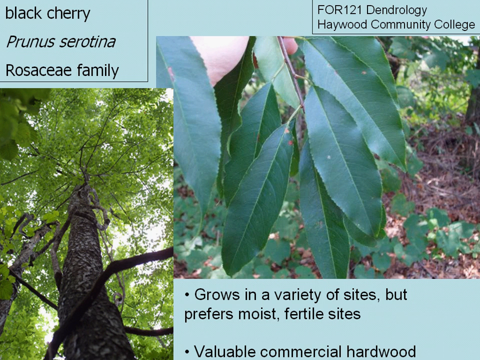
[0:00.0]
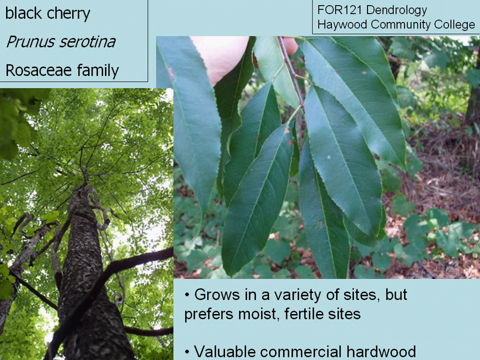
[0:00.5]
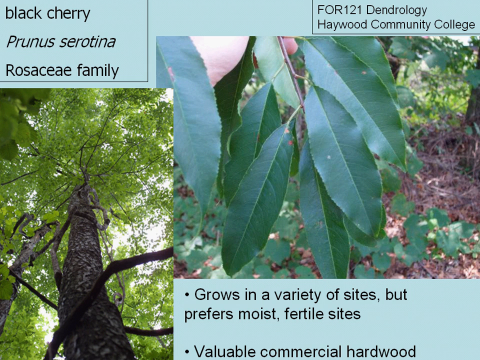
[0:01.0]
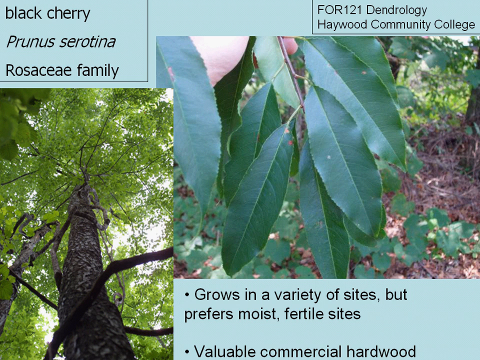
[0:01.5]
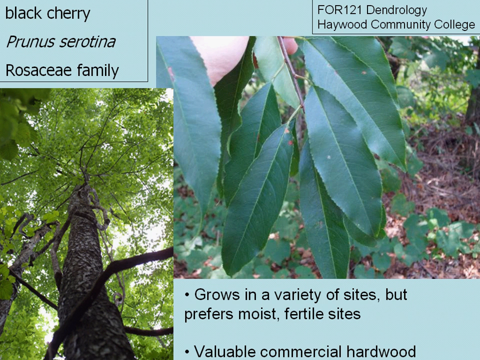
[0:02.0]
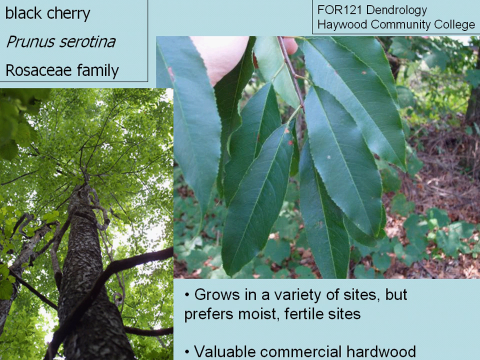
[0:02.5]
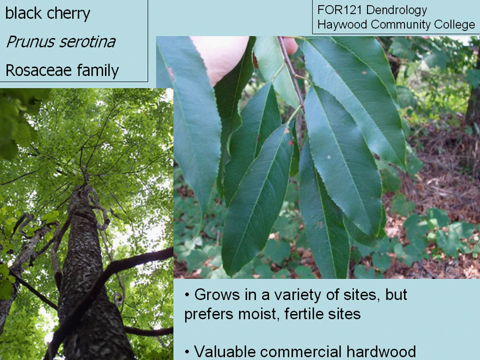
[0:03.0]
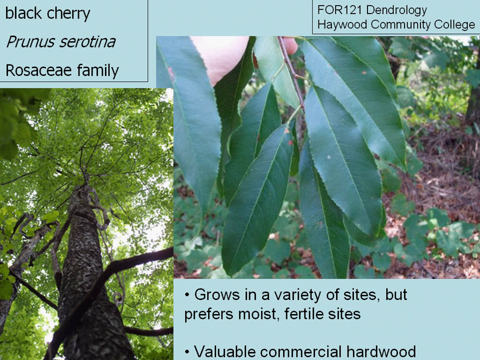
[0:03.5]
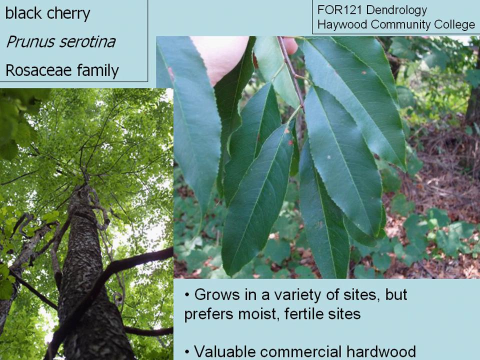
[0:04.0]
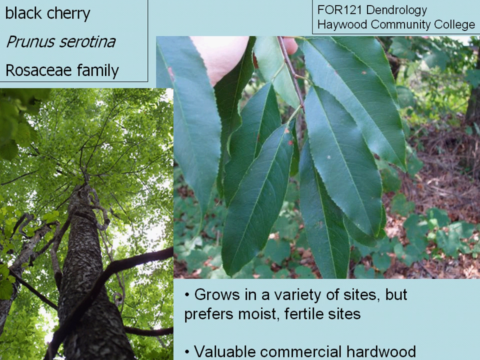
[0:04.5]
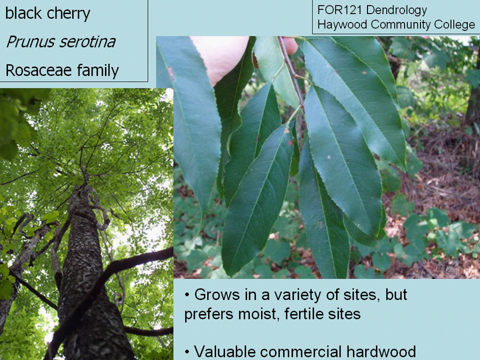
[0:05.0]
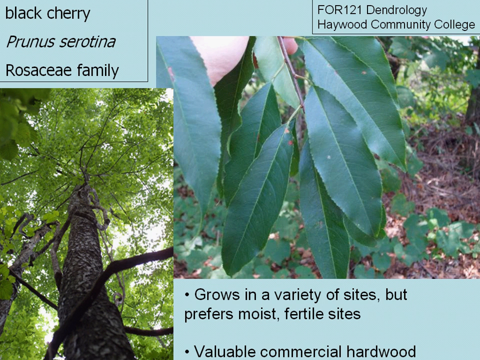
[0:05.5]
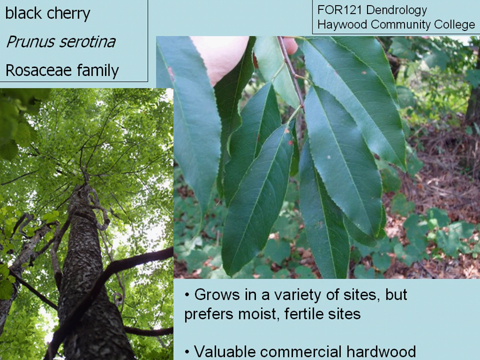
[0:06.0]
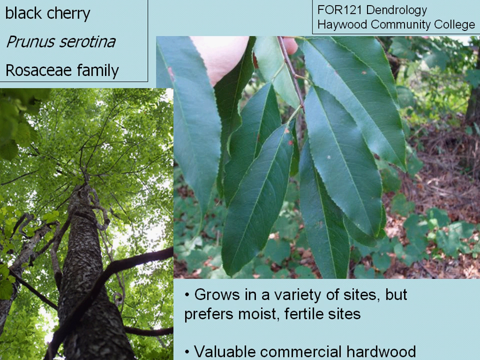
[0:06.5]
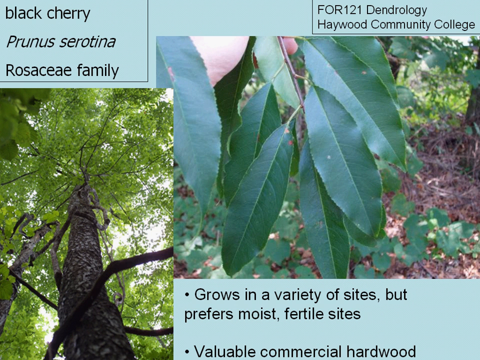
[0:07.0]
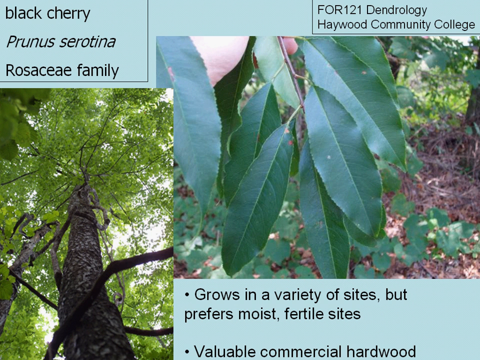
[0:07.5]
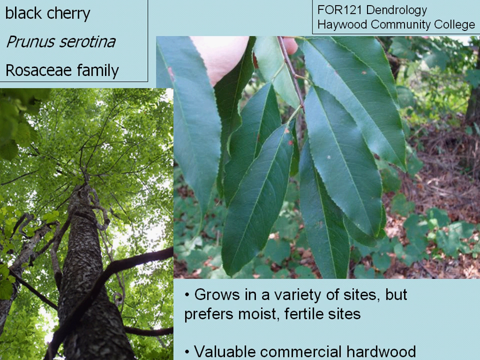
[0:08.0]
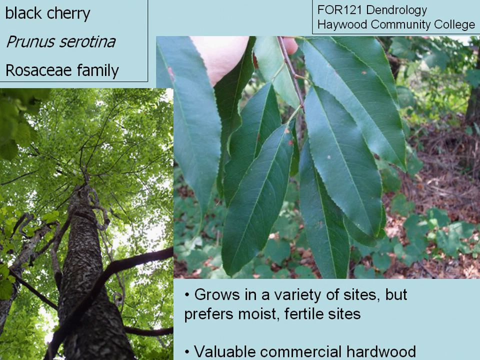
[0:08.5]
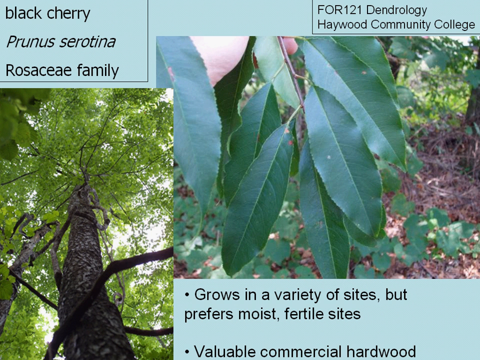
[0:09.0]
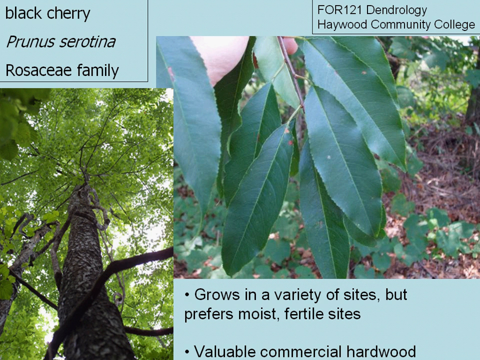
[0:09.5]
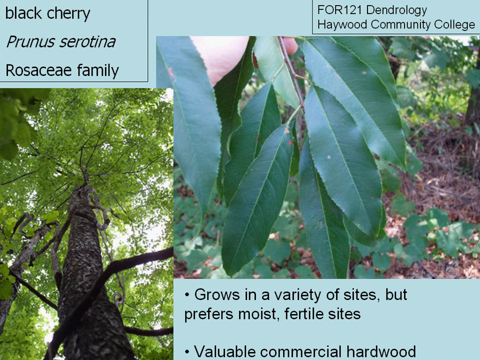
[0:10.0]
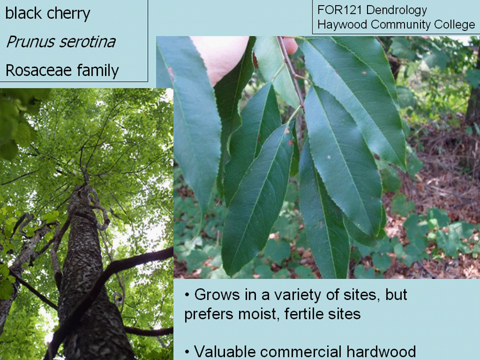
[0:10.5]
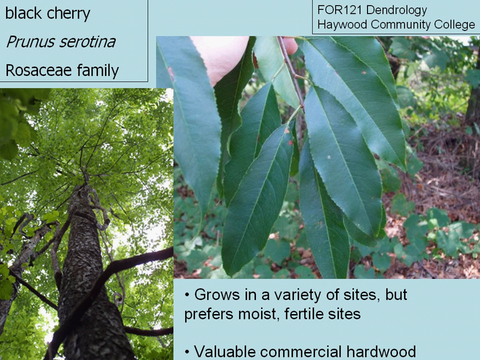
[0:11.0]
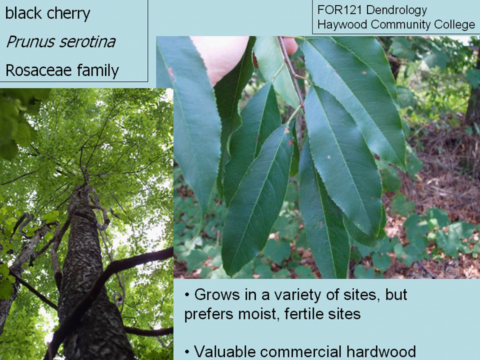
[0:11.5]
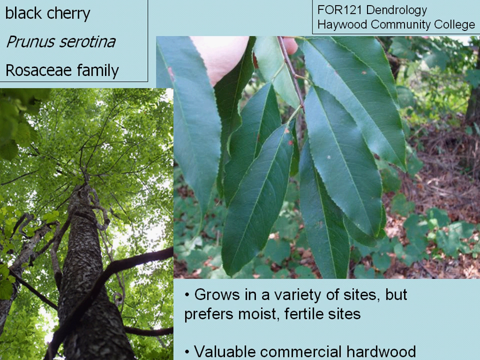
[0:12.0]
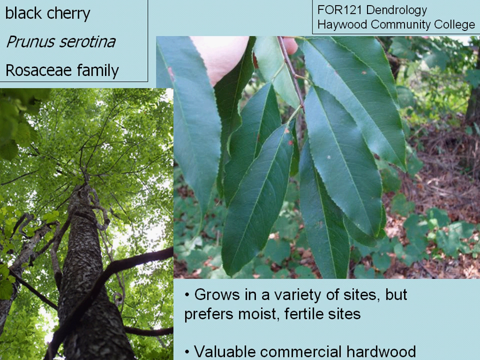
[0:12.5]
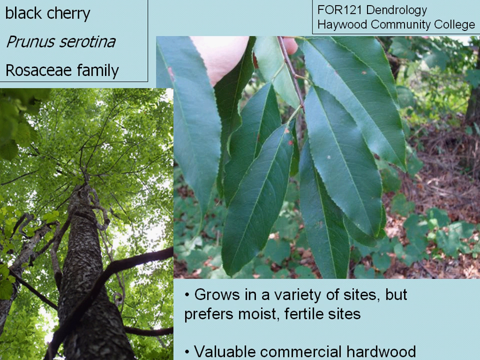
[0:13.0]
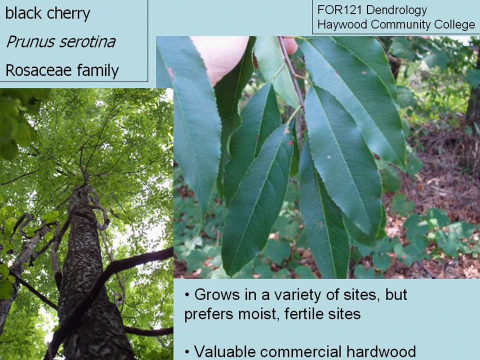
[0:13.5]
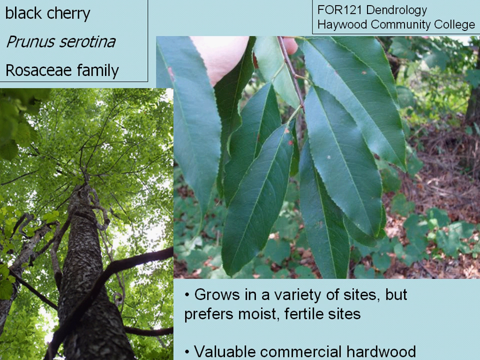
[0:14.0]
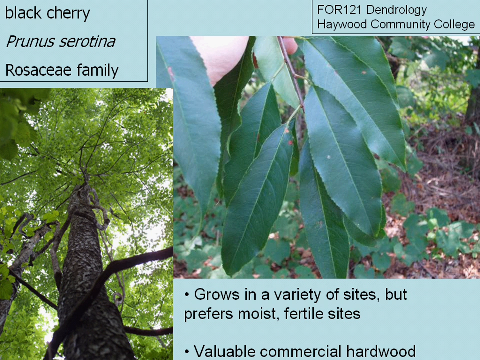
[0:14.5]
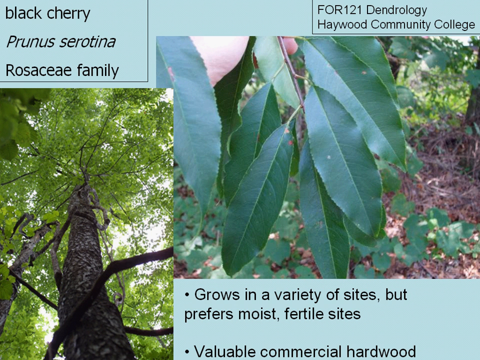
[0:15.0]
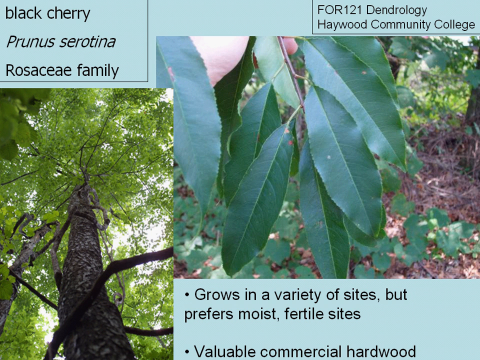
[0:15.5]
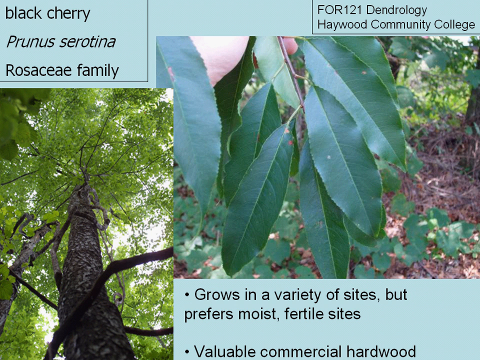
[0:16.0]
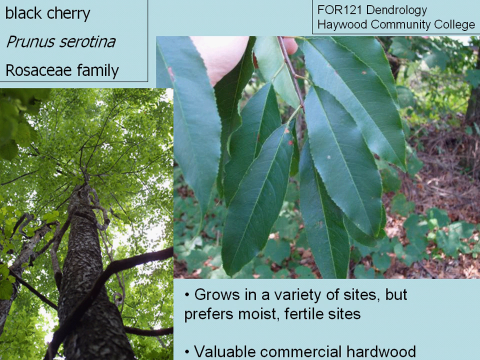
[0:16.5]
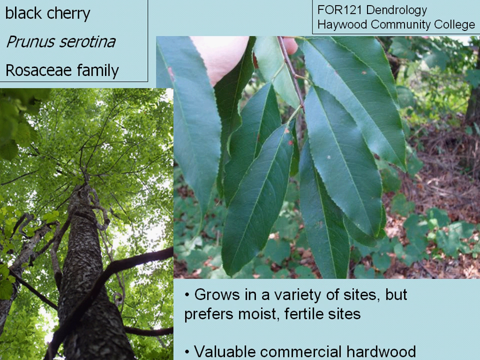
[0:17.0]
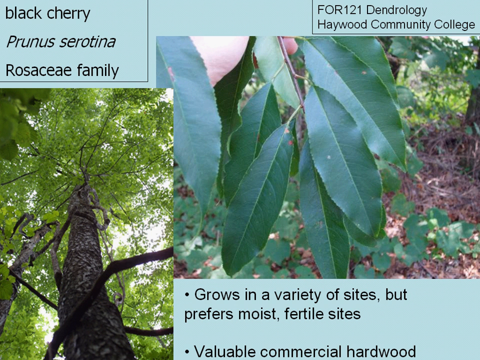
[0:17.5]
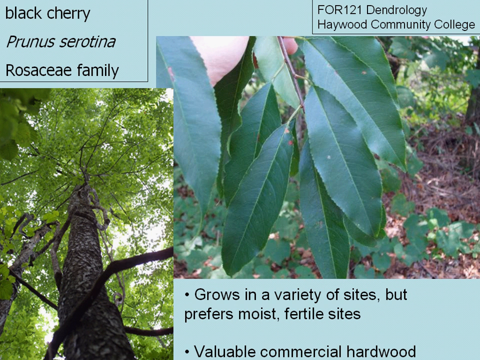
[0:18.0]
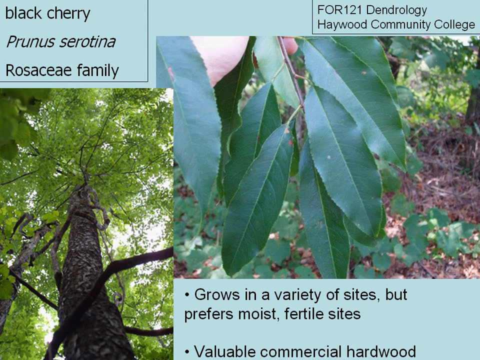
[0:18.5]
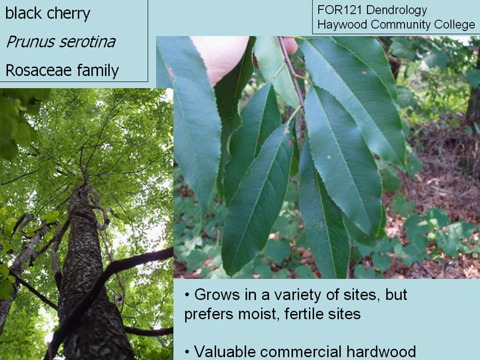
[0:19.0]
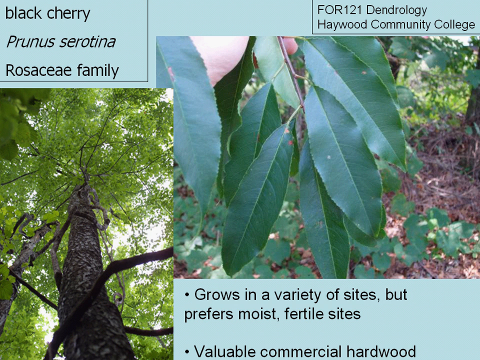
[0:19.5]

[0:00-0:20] Black text is set on a green background alongside pictures: on the left is a picture of a tree, a very long tree, and on the right is a picture of leaves. The text is divided into sections, one on the upper left, one on the upper right, and another lower down on the right. No person is visible; the only hand that can be seen appears on the leaves on the right, and there is no hand movement or cursor on the screen. The upper text reads "Black Cherry, Prunus serotina, Rosaceae family," and the upper right reads "for 121 Dendrology Highwood Community College."